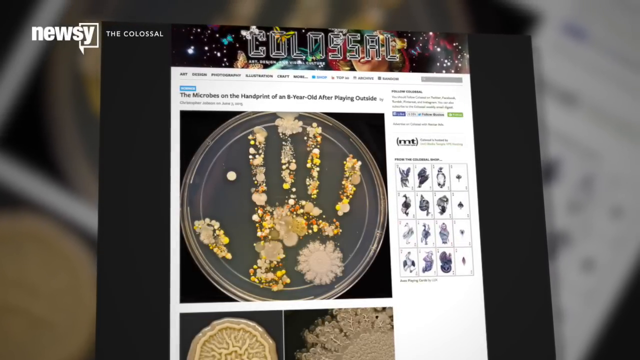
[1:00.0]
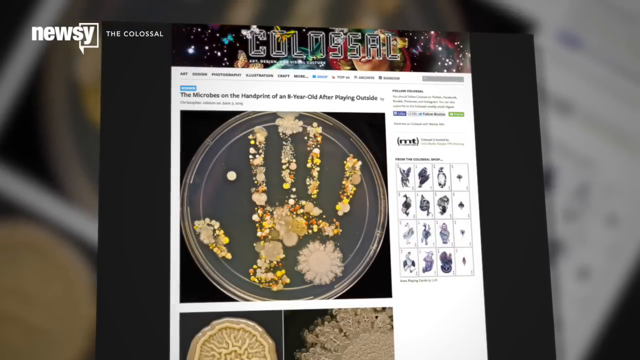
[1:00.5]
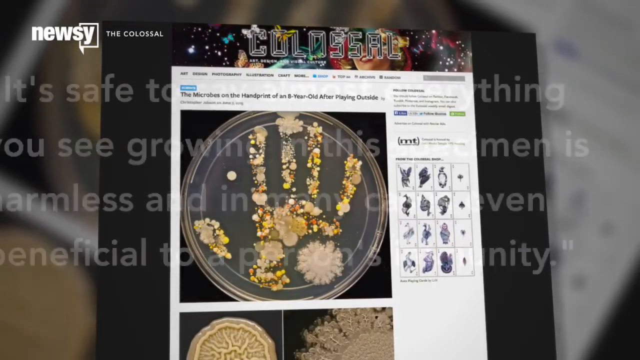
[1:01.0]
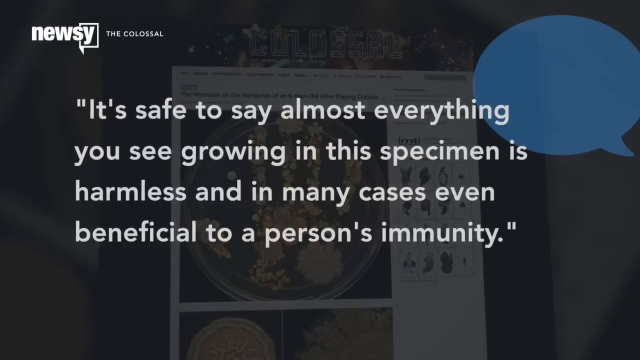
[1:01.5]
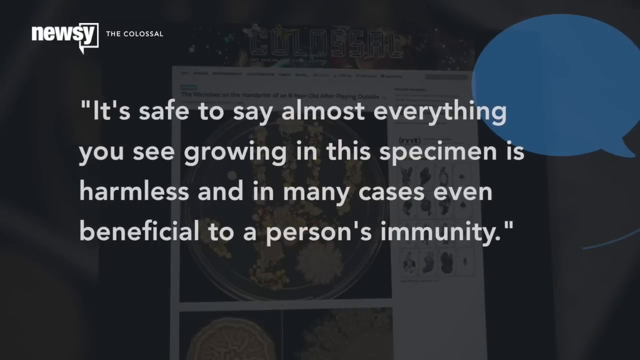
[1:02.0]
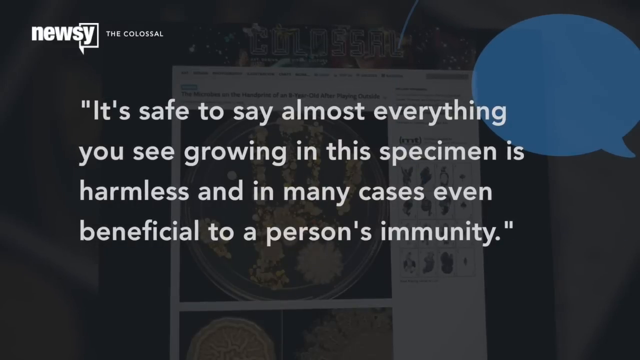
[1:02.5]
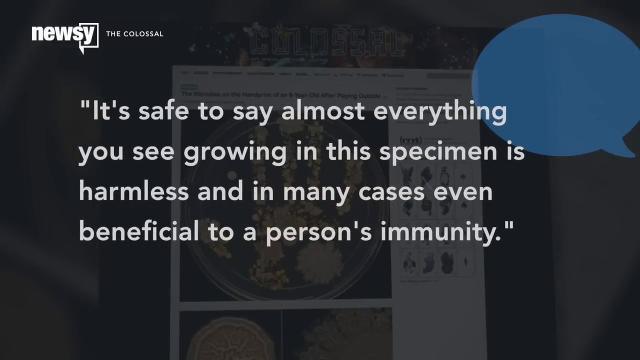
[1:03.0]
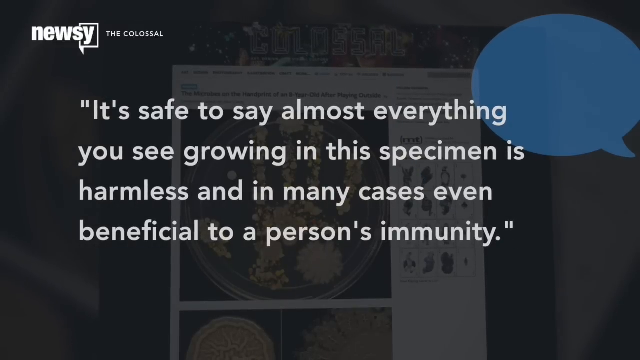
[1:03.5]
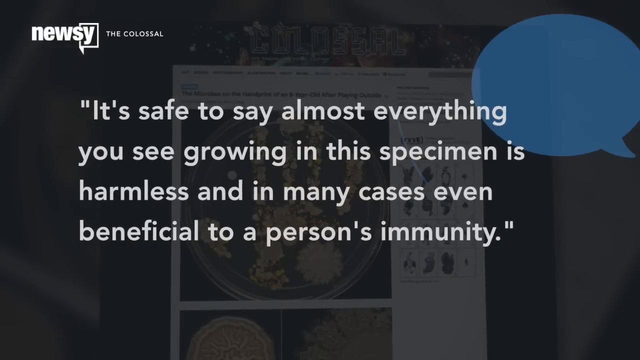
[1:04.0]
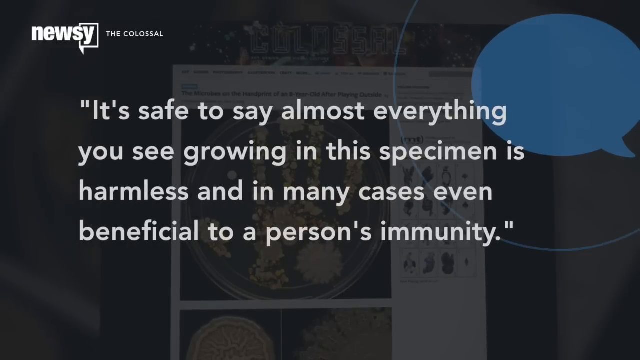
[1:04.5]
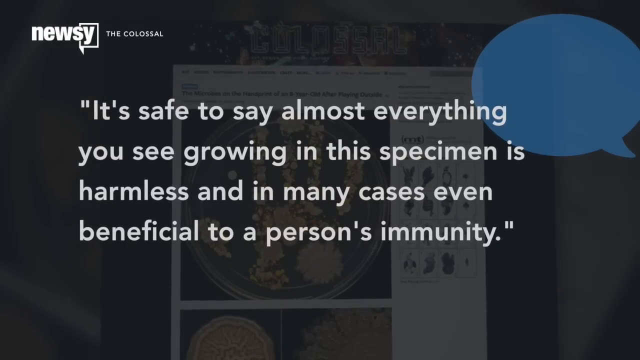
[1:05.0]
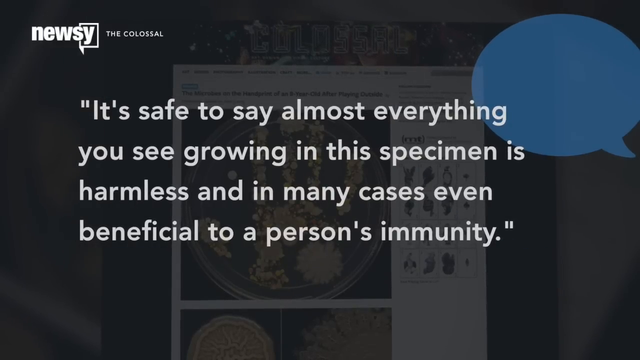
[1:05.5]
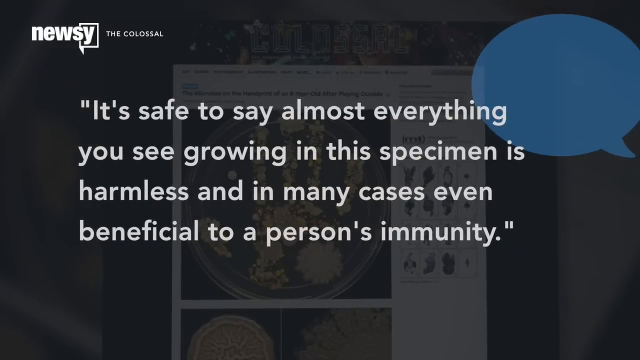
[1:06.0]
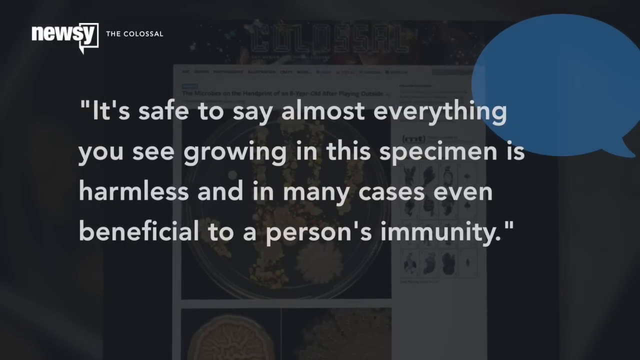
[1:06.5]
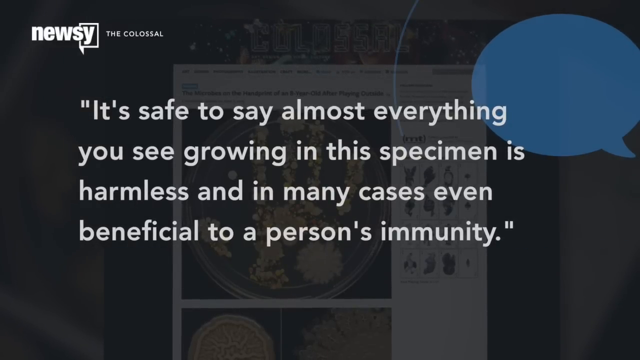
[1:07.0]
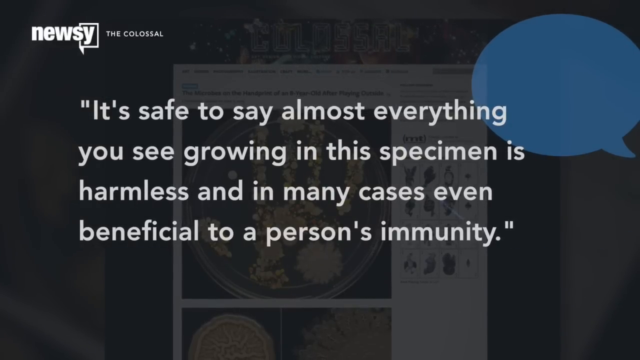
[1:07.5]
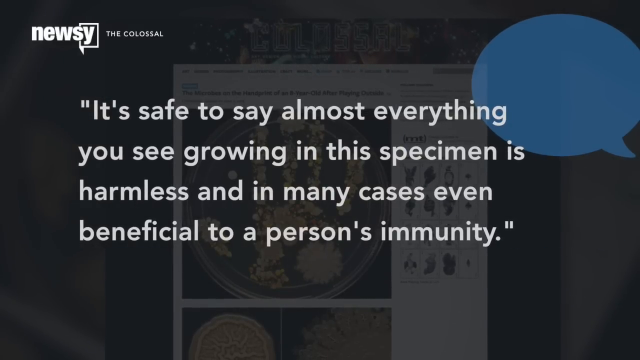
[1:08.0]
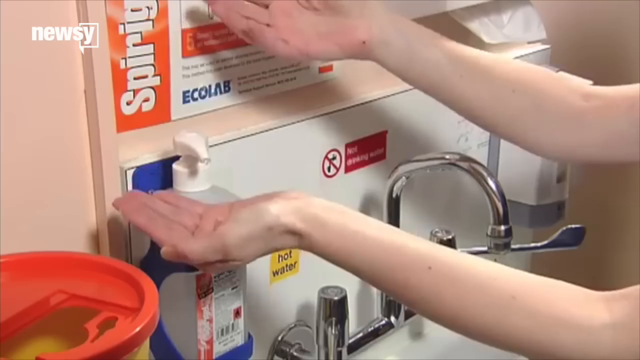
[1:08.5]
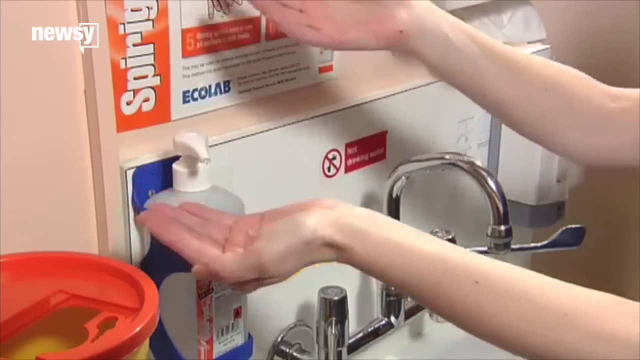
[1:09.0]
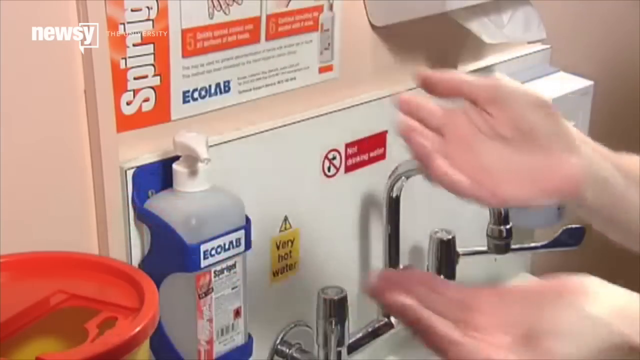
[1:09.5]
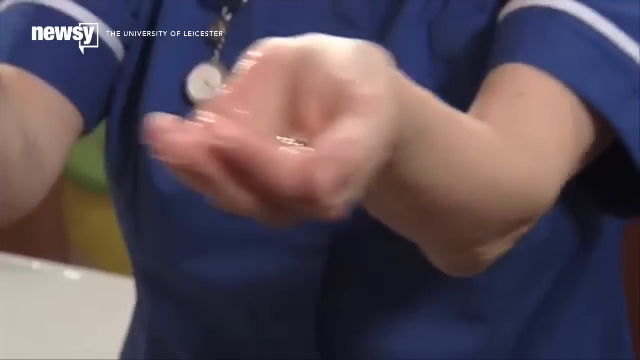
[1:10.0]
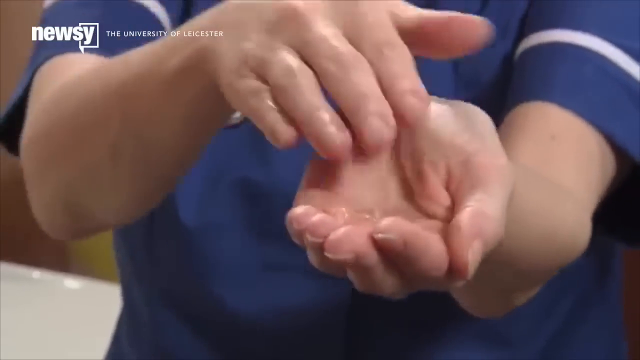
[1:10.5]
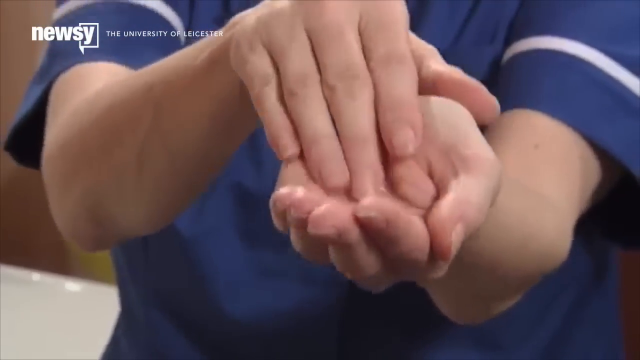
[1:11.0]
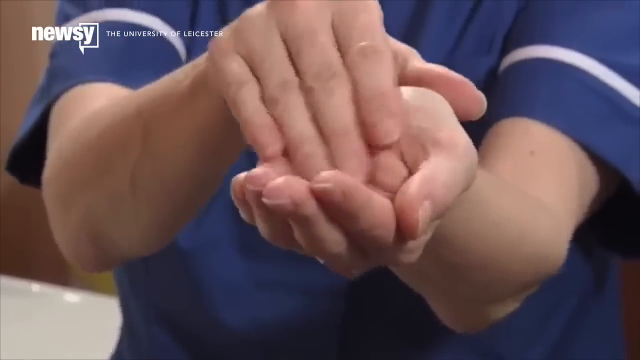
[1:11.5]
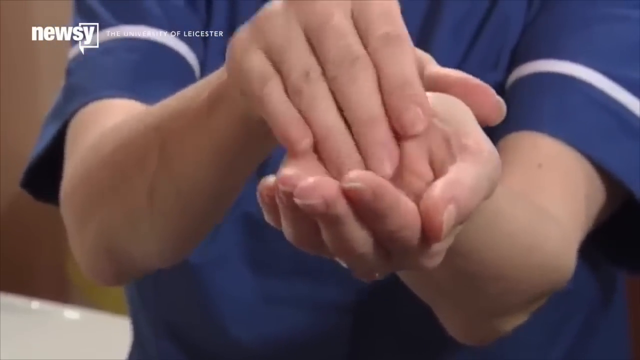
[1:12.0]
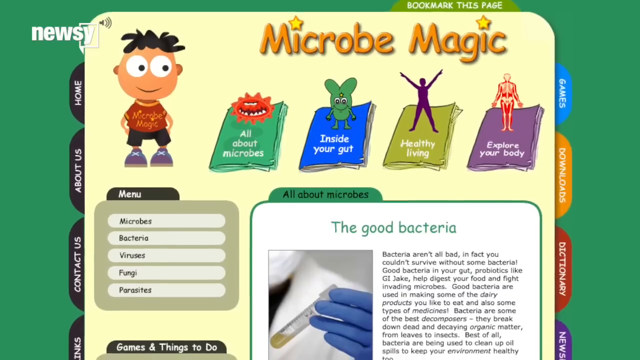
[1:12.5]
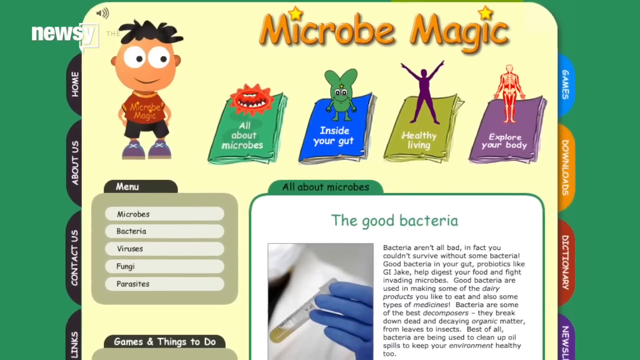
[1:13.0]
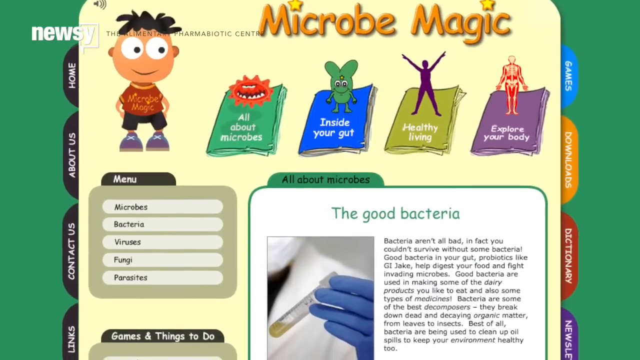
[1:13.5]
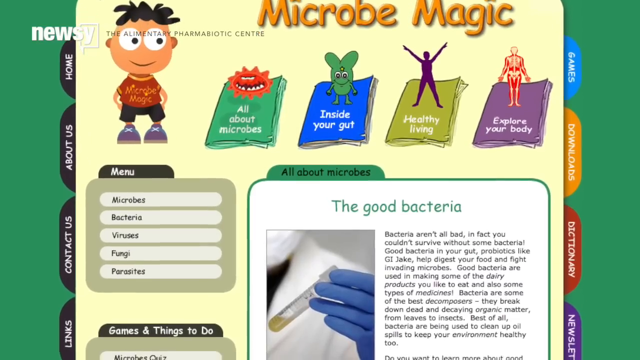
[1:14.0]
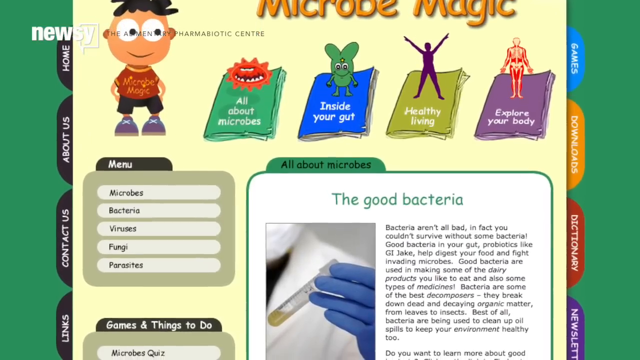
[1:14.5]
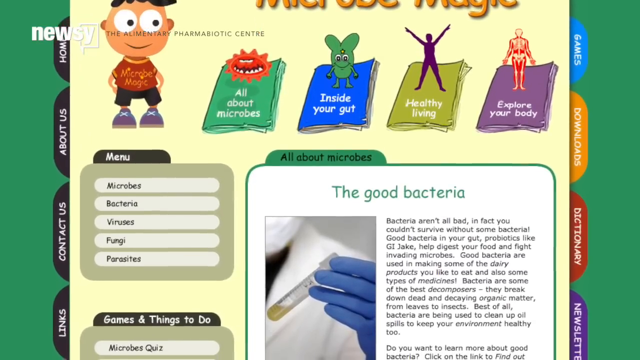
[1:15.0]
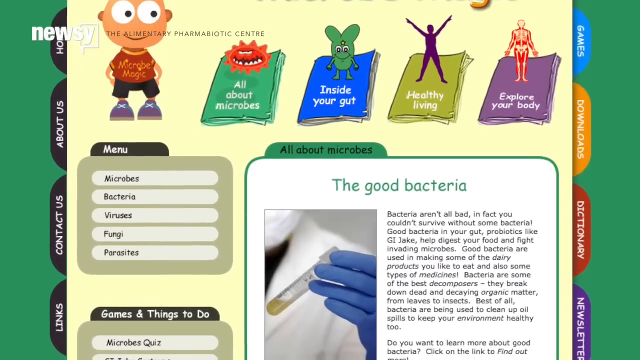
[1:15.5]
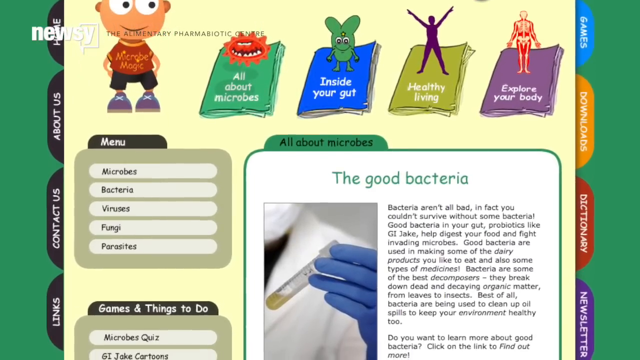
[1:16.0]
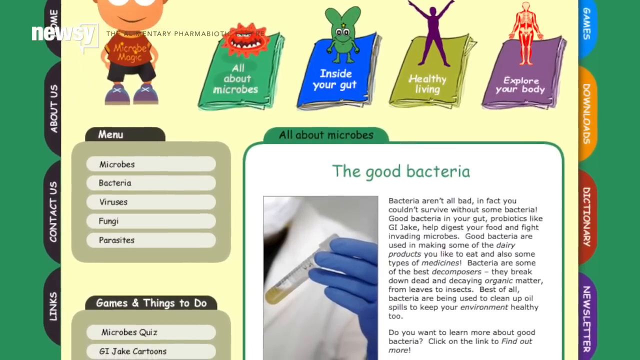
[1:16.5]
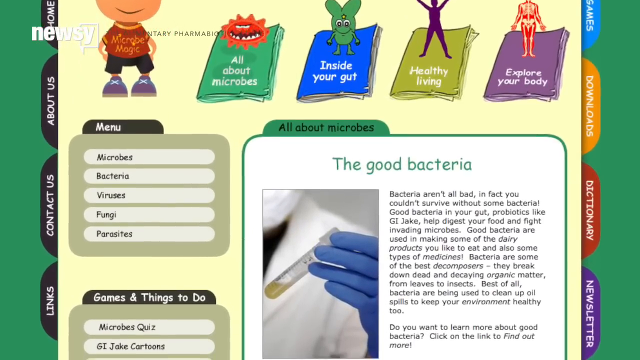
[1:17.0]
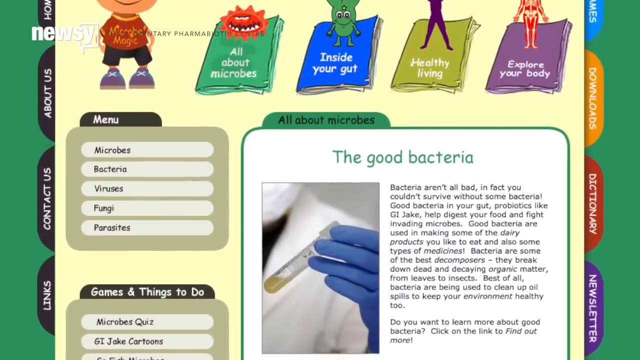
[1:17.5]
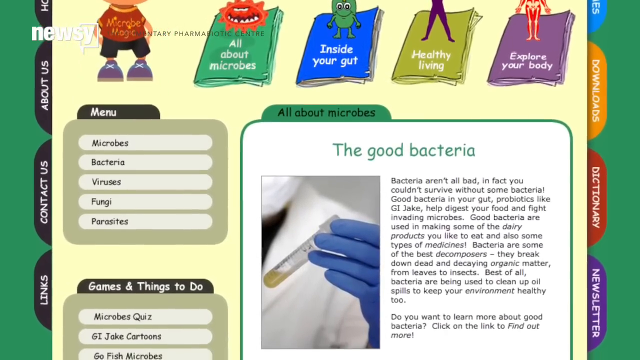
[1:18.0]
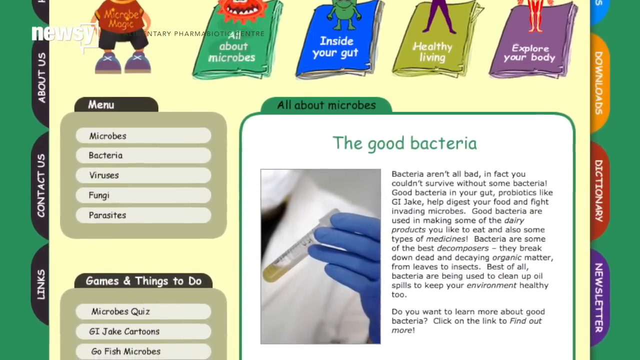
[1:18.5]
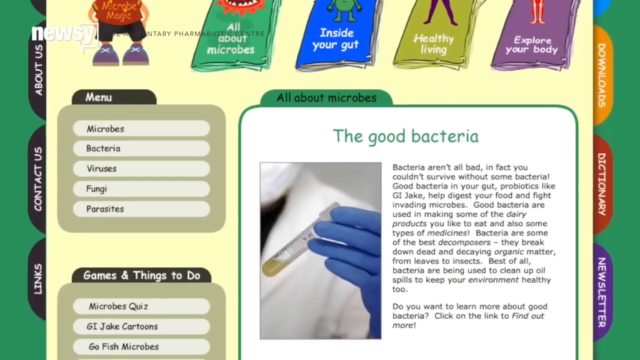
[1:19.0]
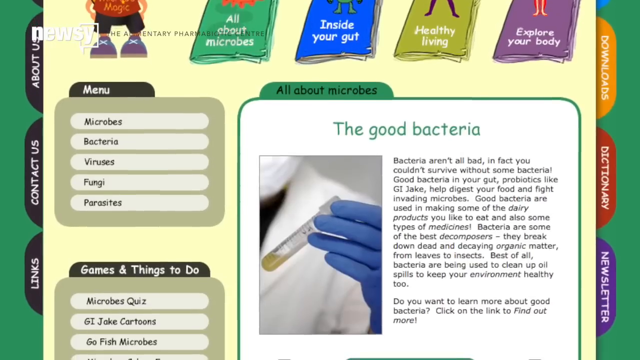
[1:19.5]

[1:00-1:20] The image of the article about the eight-year-old's mould handprint carries the caption "it's safe to say almost everything you see growing in this specimen is harmless and in many cases even beneficial to a person's immunity". A blue speech bubble appears at the top right of the screen. Next, a person wearing a nurse's uniform uses hand gel by a sink; there is a significant amount of gel in her hand, and she uses the fingers of her right hand to rub in the gel from her right hand. A cartoon-type information page headed "Microbe Magic" follows, with a cartoon figure of a young child next to a series of coloured books on different topics. The first is a green book with a devil-like organism in red, reading "all about microbes". The next is a blue book titled "Inside Your Gut", with a green fly with a smile and eyes. The next is an olive green book titled "Healthy Living", with a person's body with outstretched arms and legs on it. The last, a purple book, reads "Explore Your Body" and shows a figure of a person's skeleton and muscles. The lead article on the page is about the good bacteria and shows a picture of a person's hand in a blue glove holding a test tube with yellow liquid in it, about how not all bacteria are bad.